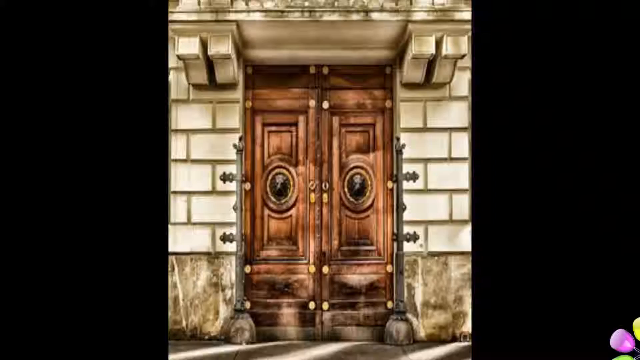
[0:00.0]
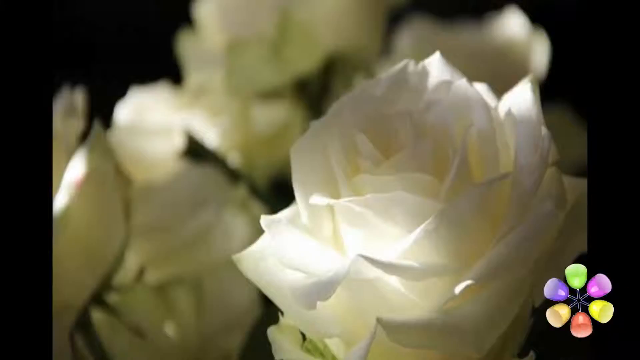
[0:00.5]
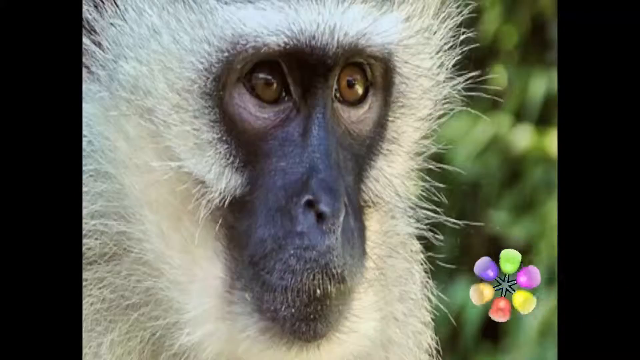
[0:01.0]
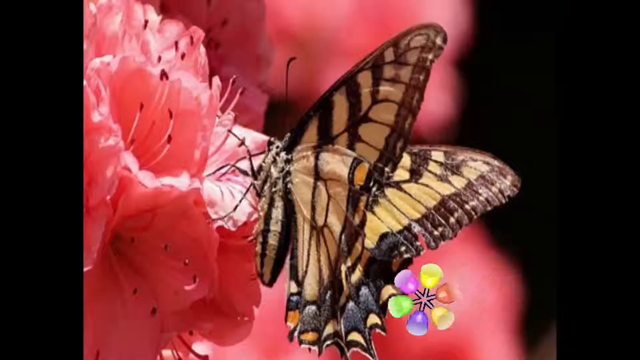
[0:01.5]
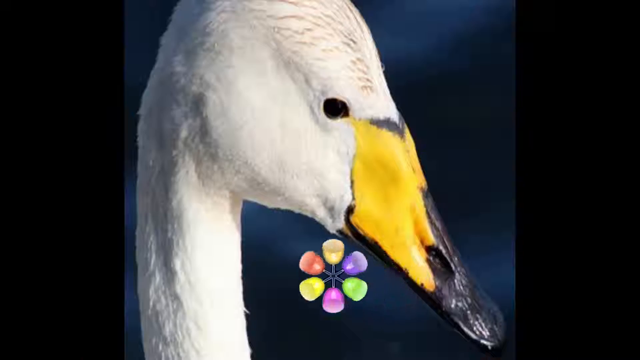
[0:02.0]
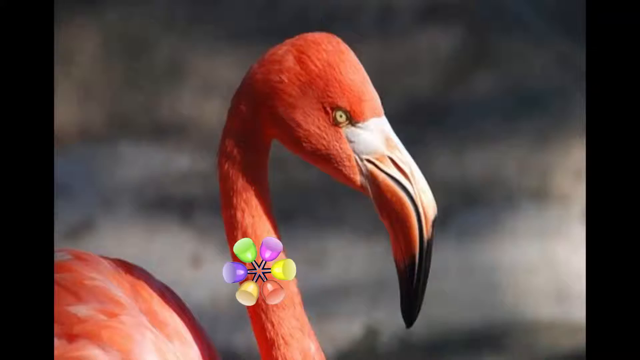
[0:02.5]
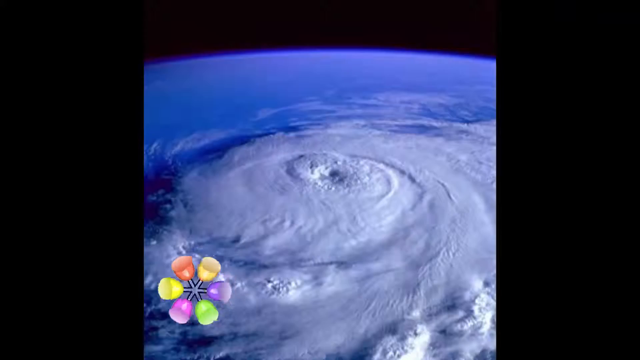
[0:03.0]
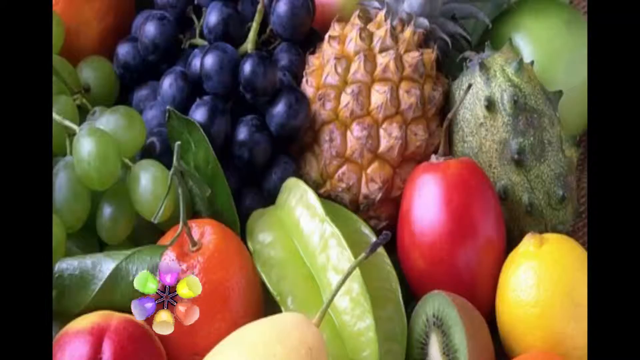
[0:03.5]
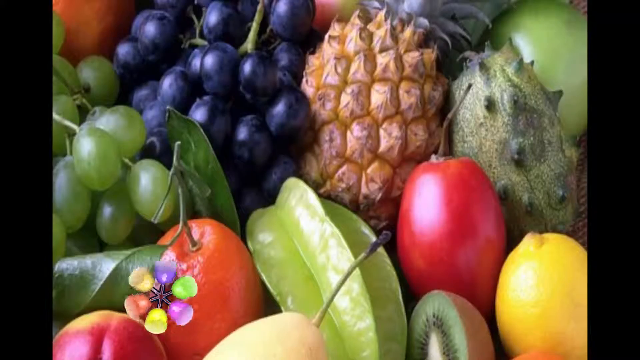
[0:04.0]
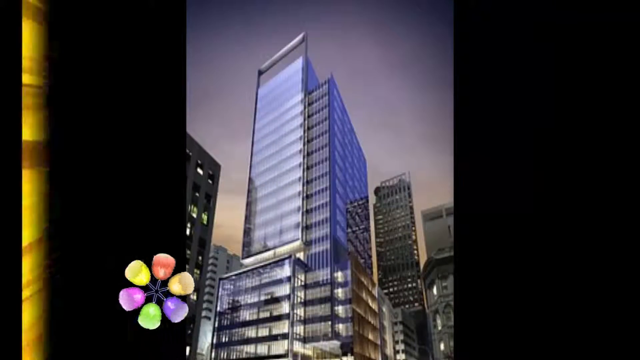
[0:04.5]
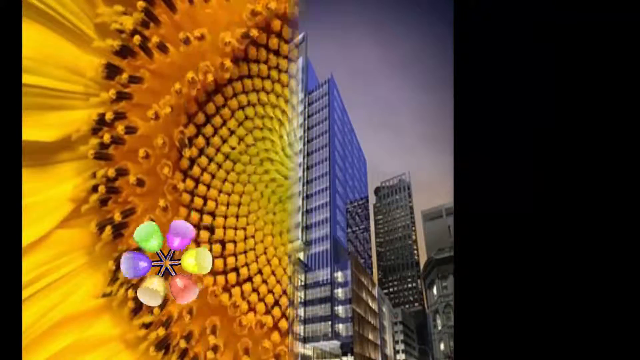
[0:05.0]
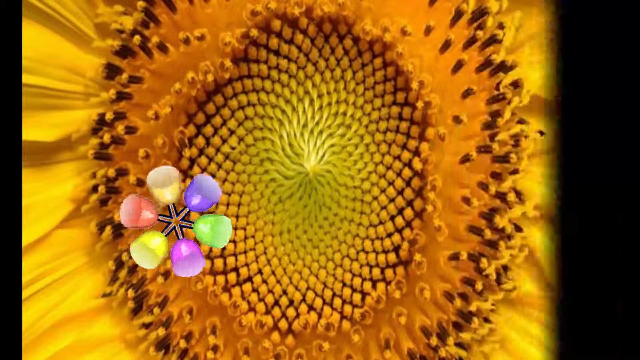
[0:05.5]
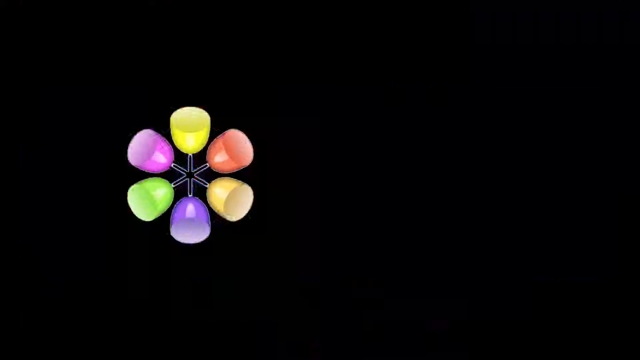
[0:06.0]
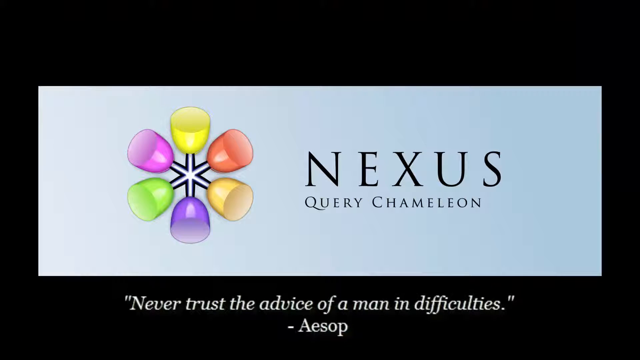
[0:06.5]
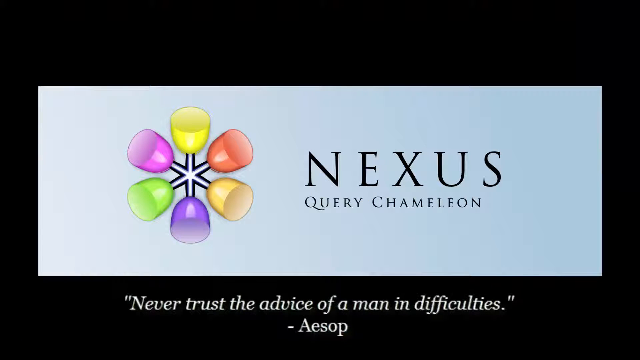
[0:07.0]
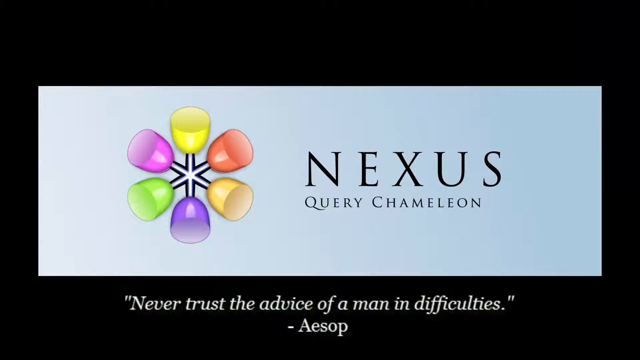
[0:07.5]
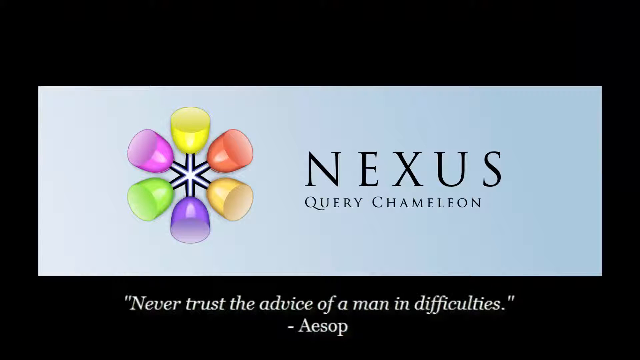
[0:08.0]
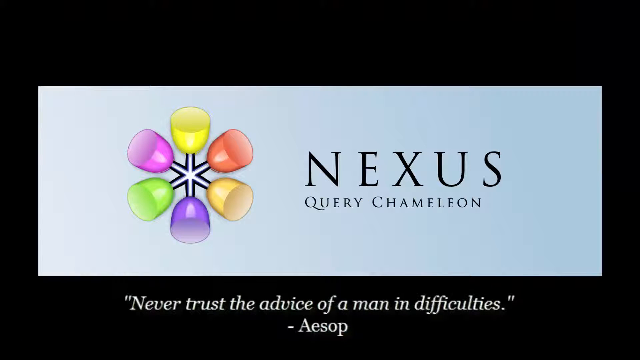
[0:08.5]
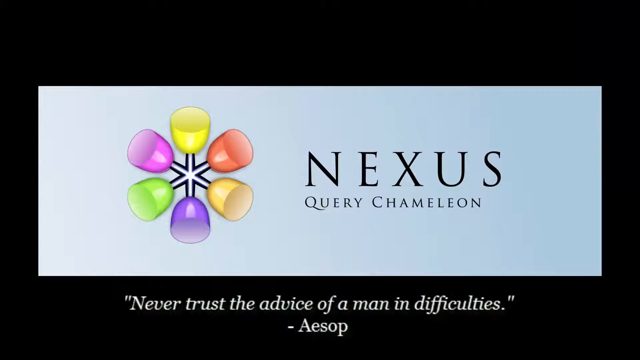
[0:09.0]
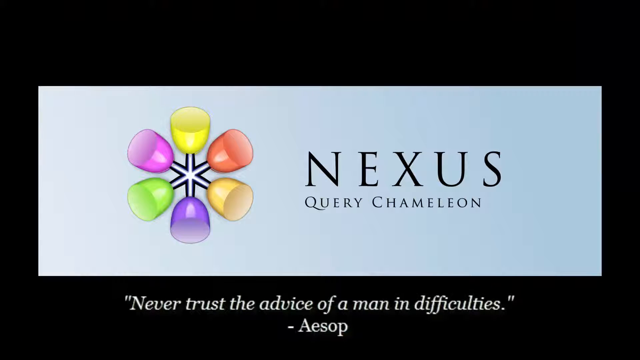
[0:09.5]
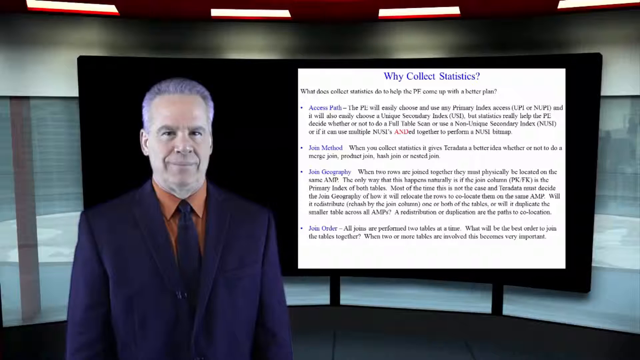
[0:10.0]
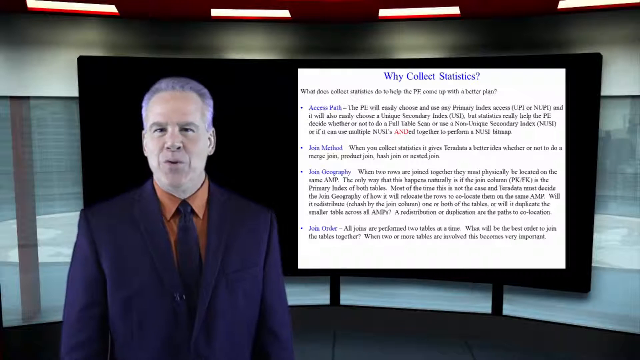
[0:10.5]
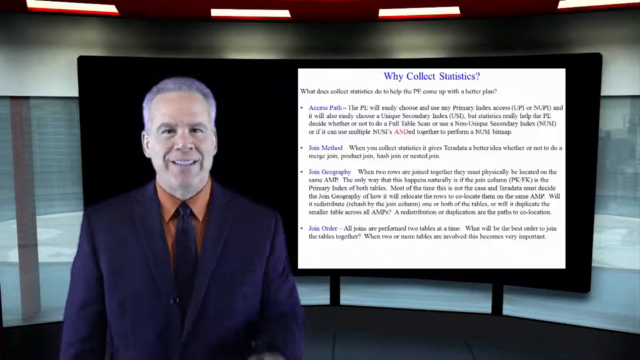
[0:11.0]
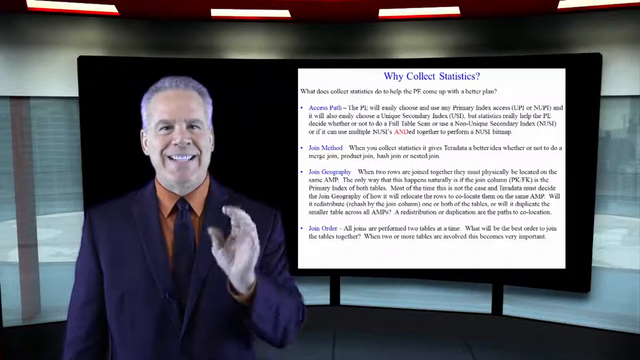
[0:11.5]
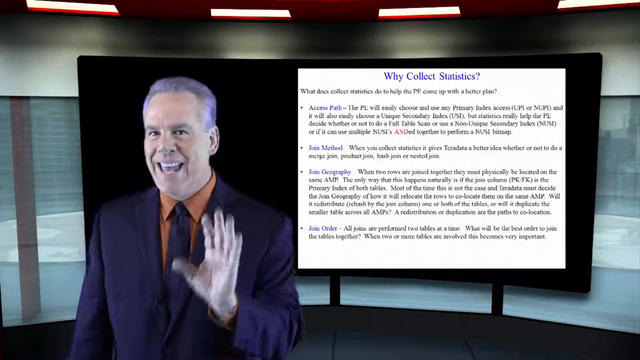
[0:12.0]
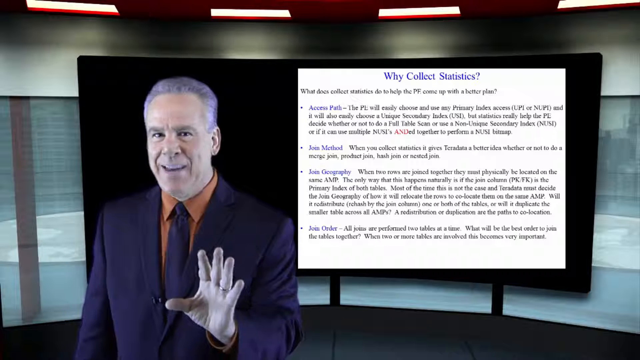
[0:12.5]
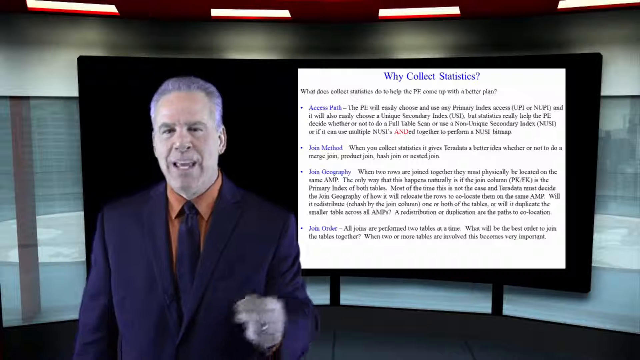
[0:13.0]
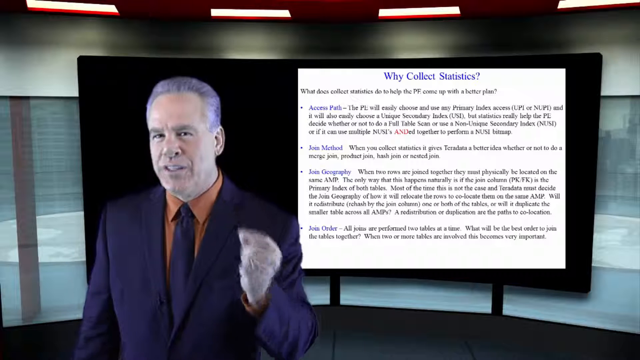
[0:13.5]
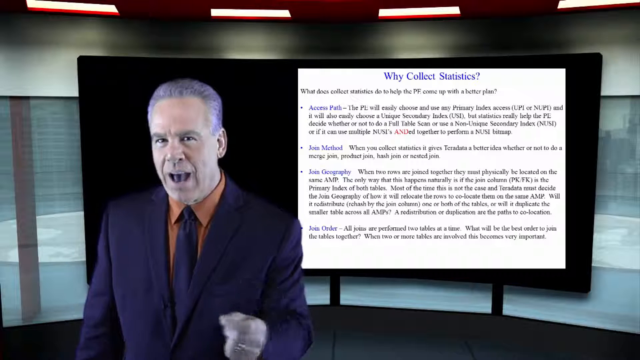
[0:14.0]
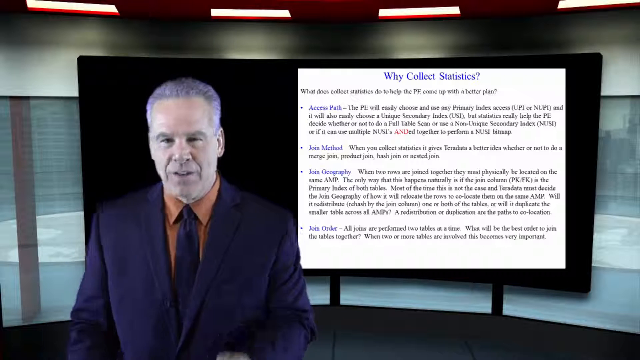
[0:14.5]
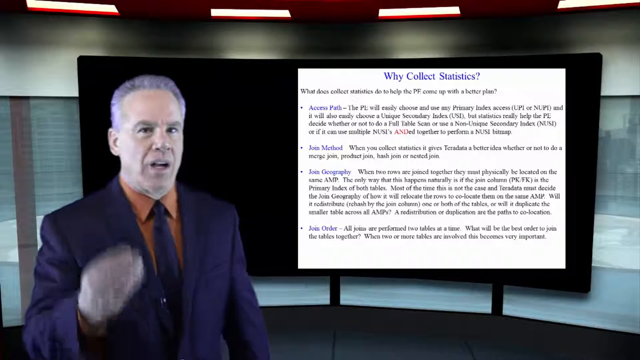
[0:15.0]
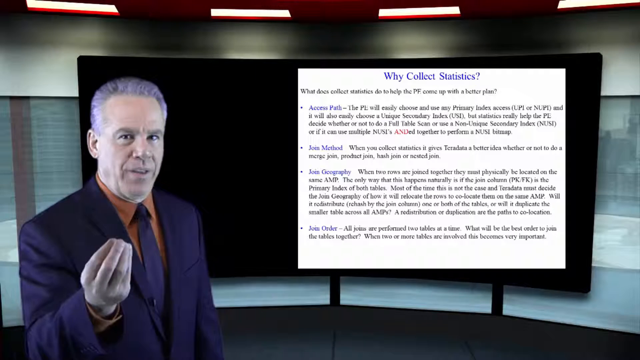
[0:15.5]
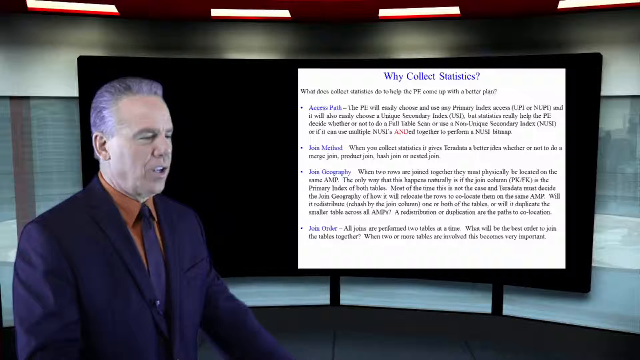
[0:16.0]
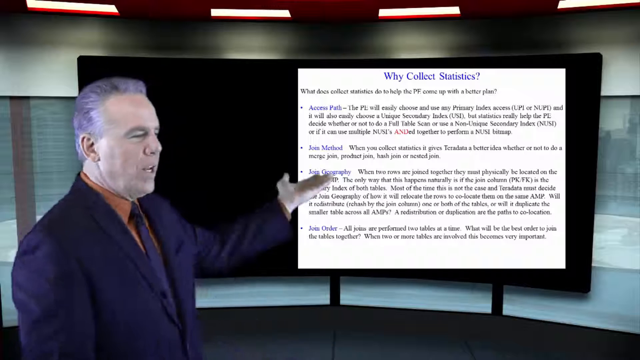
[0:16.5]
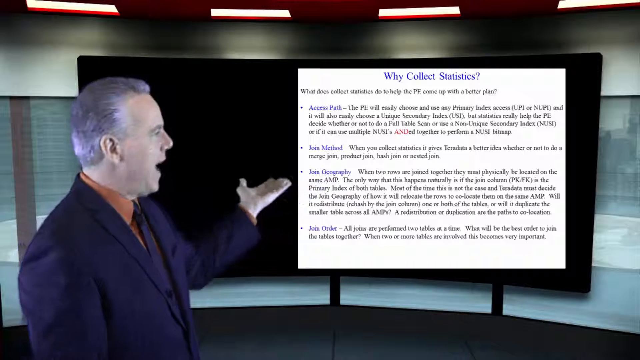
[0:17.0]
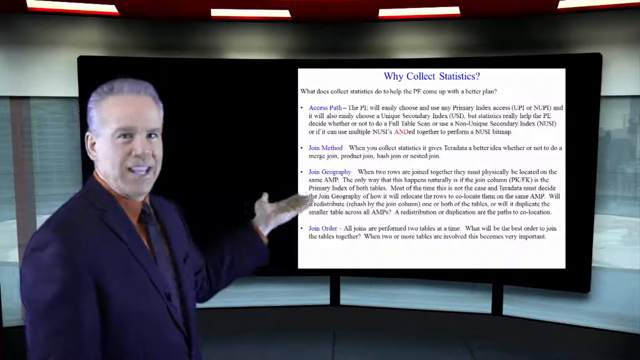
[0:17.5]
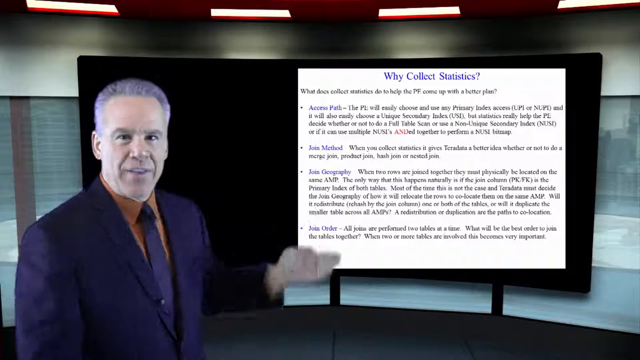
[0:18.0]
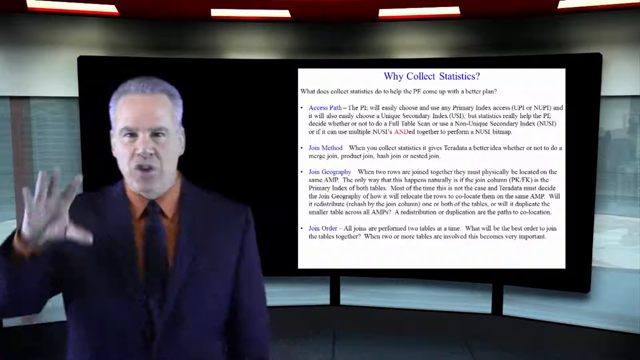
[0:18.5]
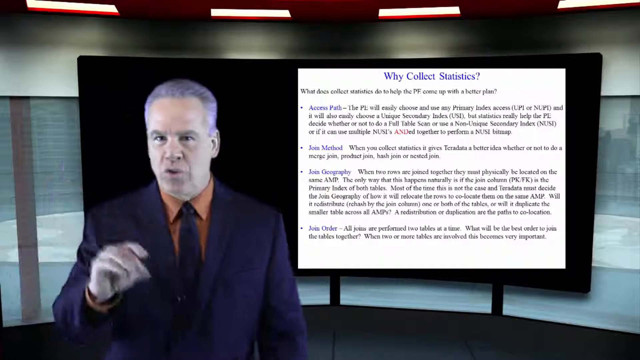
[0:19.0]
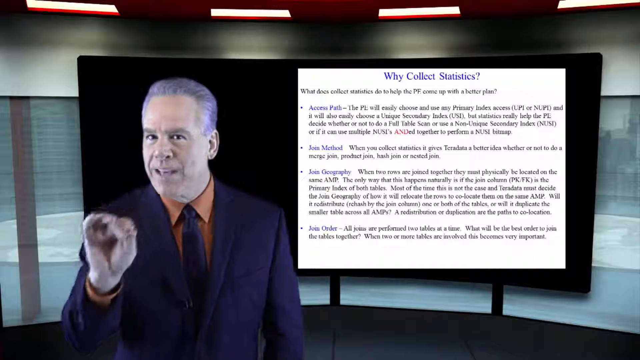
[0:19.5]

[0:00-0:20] The video opens with a series of quick single images of things found in nature, such as animals and flowers, including a flamingo, a goose, a group of vegetables, and a close-up of a yellow flower. A man in a suit and tie then appears, talking in a very animated fashion and gesturing towards a screen. The logo of Nexus Query Chameleon is also visible, and underneath it the text reads "never trust the advice of a man in difficulties." The screen the man is in front of has several paragraphs of text under the title "Why Collect Statistics?" Next comes a single shot of what appears to be two very ornate doors in a room with a very shiny floor.